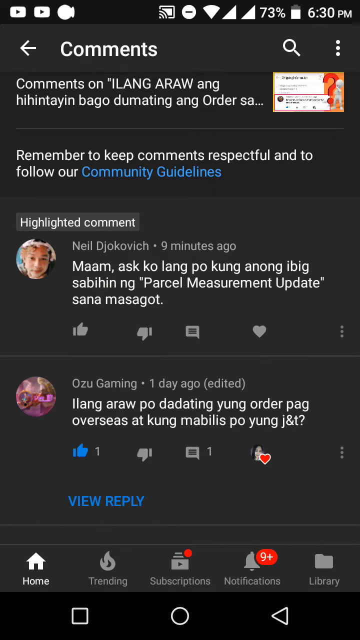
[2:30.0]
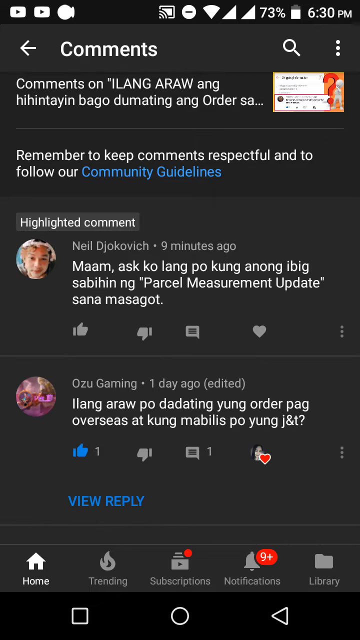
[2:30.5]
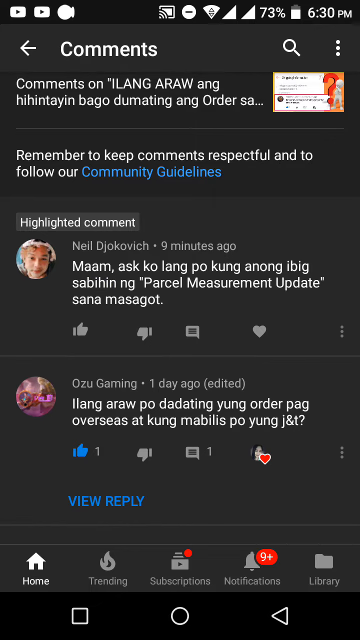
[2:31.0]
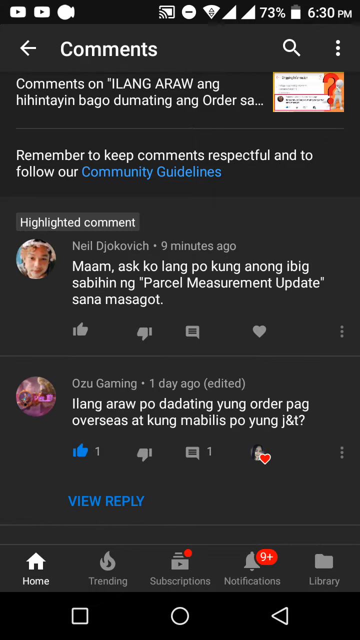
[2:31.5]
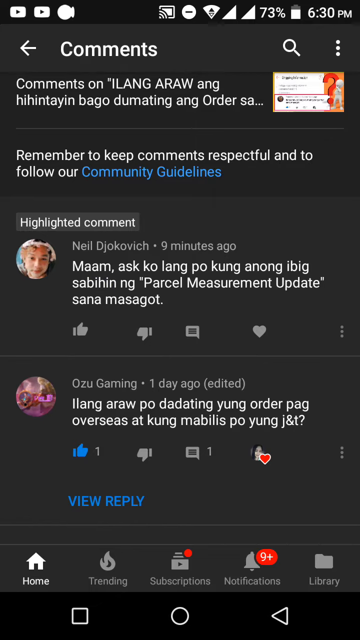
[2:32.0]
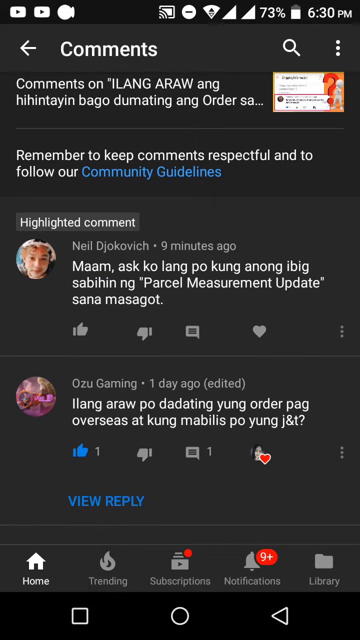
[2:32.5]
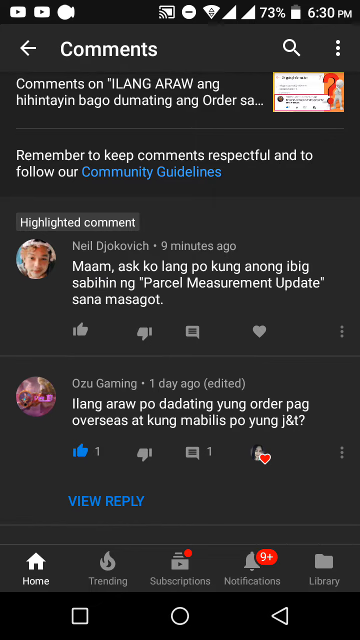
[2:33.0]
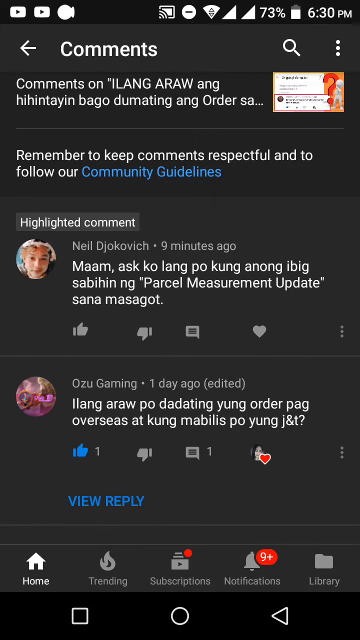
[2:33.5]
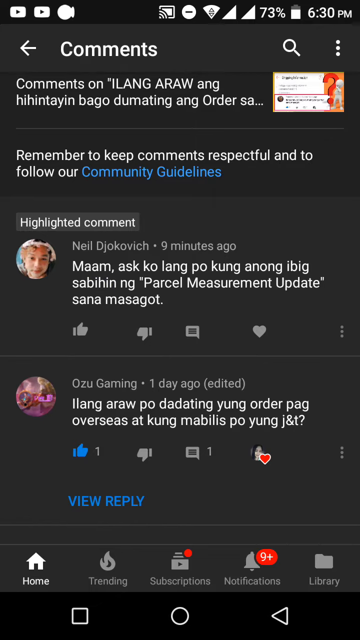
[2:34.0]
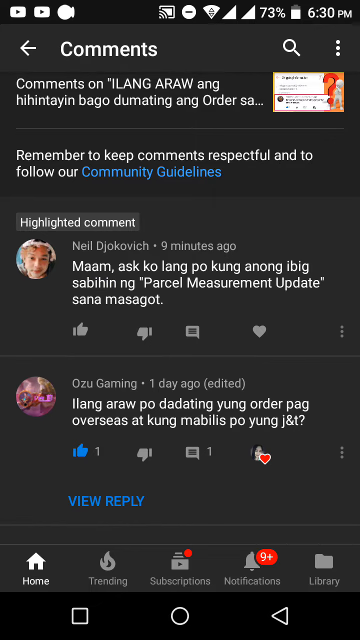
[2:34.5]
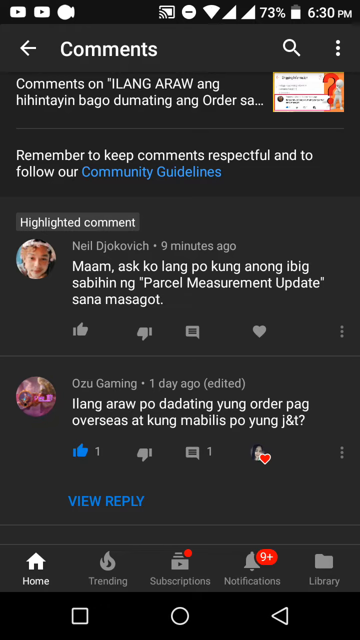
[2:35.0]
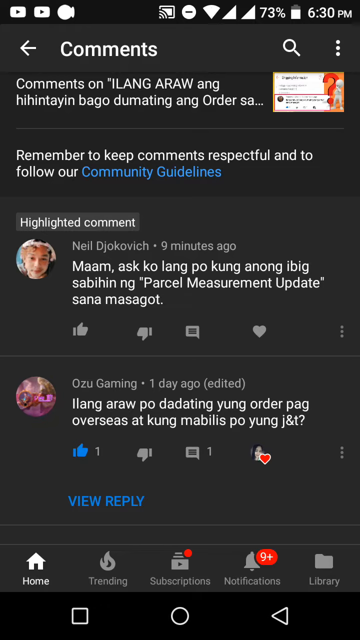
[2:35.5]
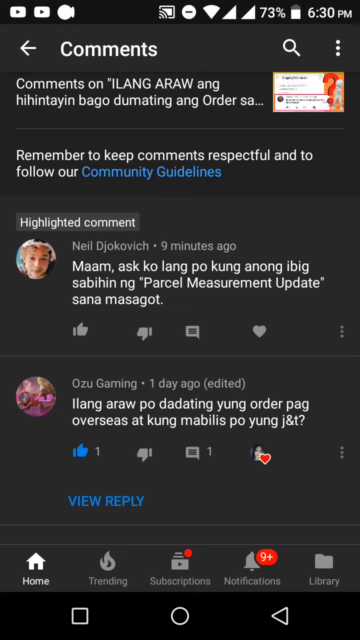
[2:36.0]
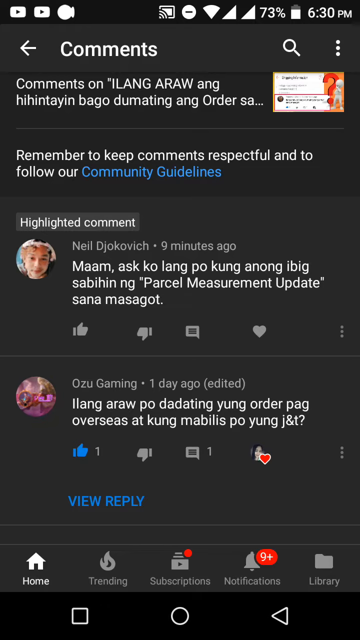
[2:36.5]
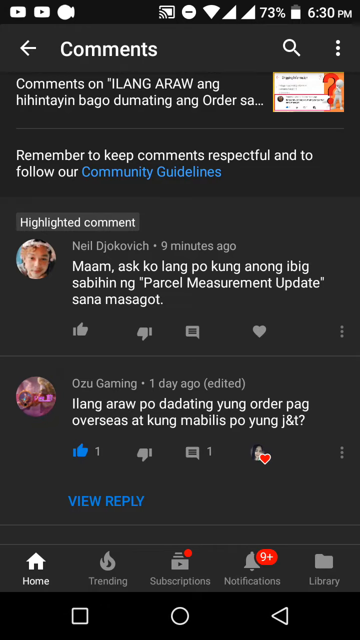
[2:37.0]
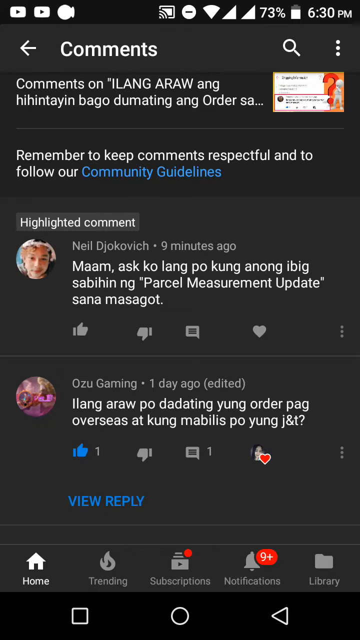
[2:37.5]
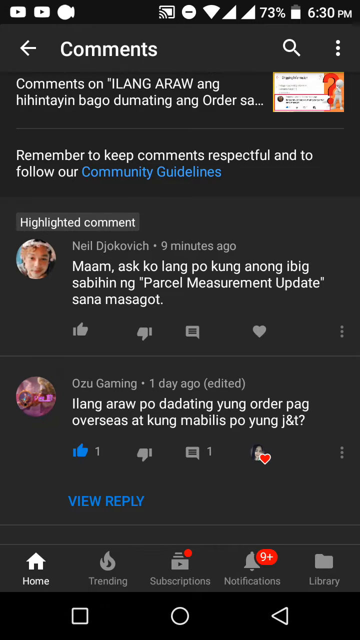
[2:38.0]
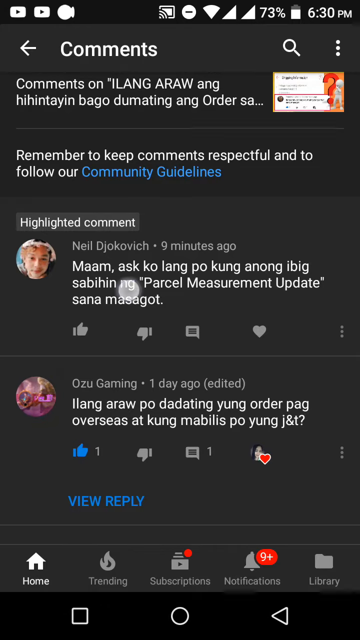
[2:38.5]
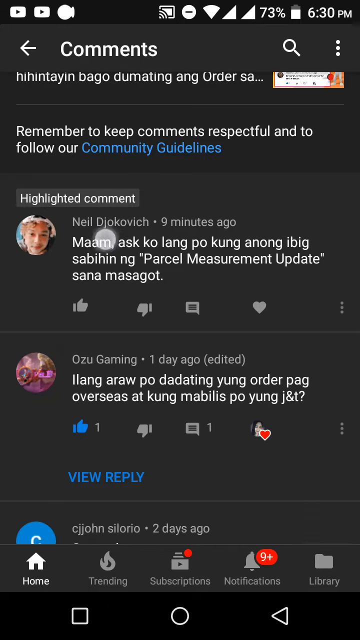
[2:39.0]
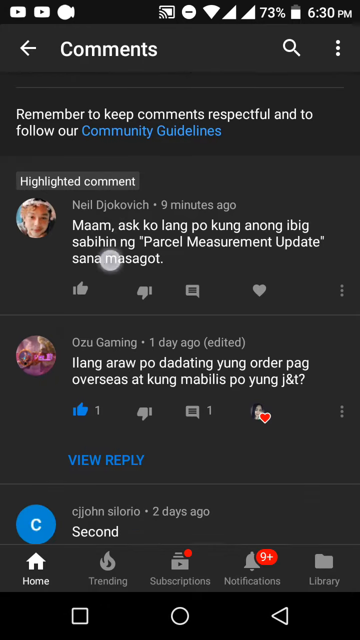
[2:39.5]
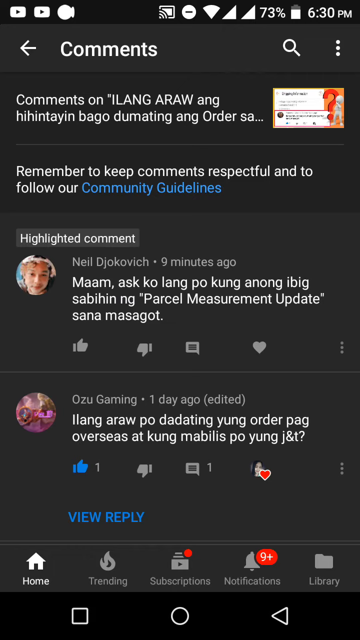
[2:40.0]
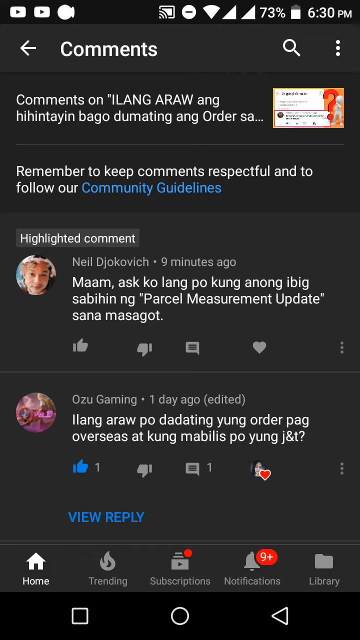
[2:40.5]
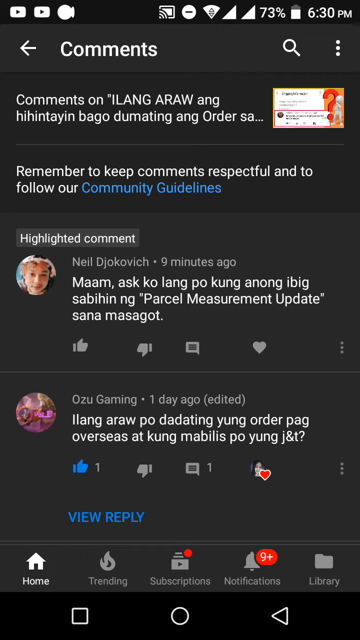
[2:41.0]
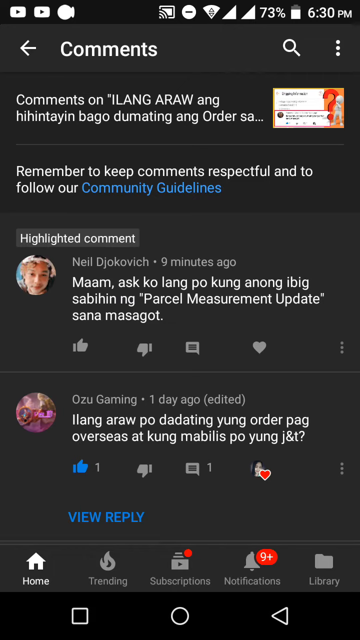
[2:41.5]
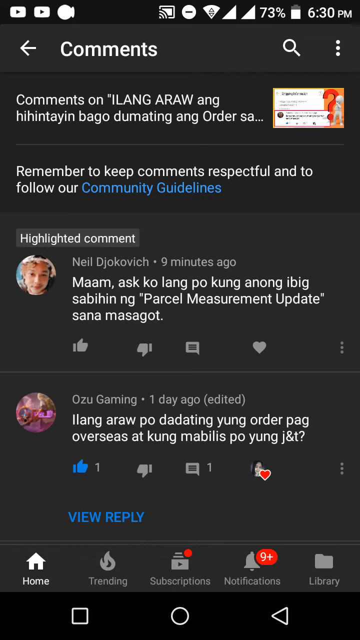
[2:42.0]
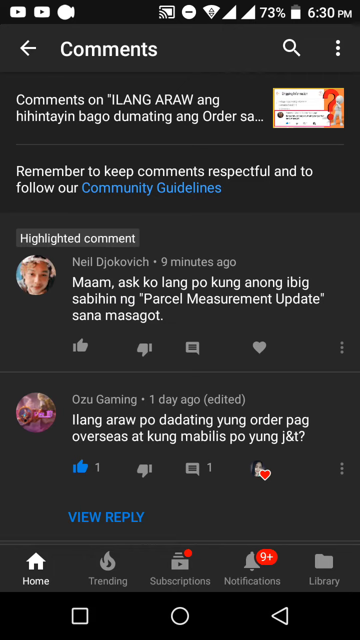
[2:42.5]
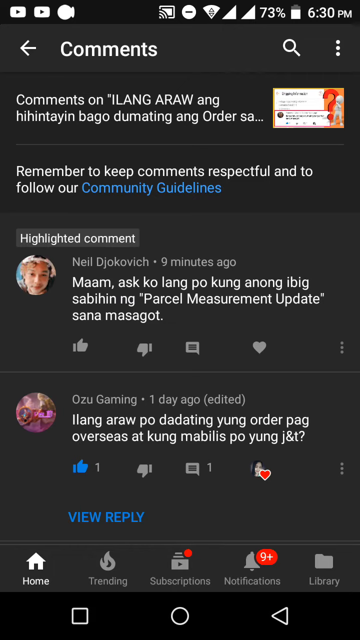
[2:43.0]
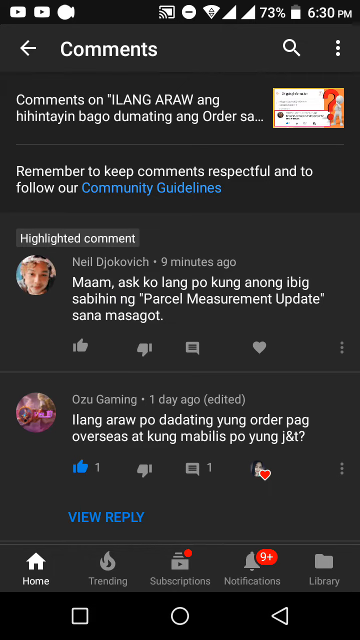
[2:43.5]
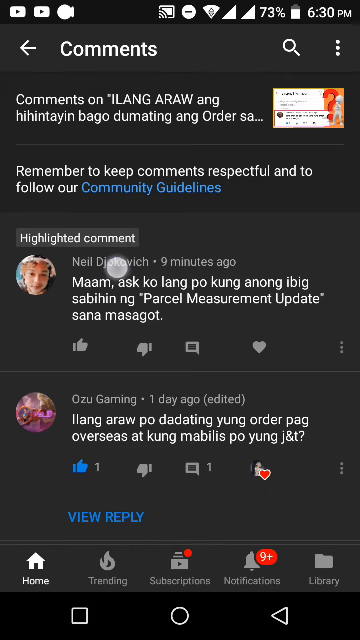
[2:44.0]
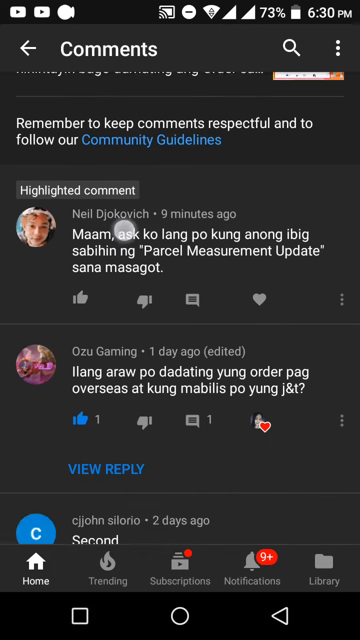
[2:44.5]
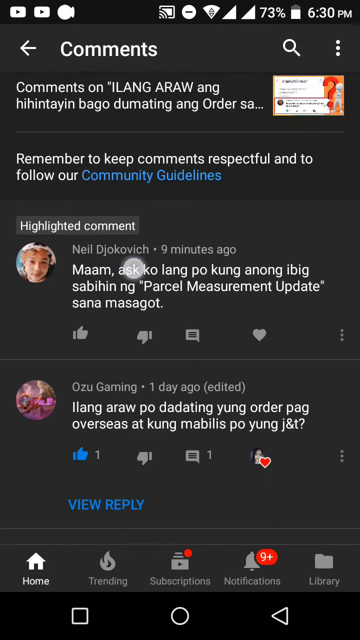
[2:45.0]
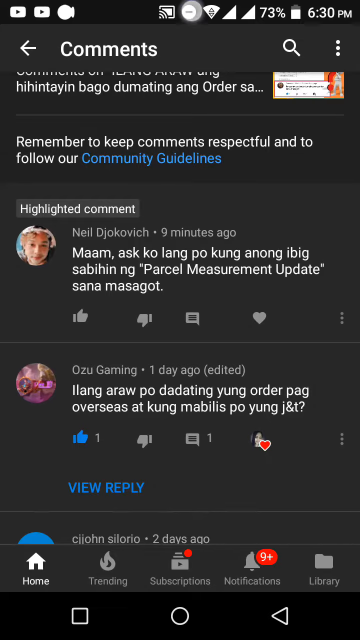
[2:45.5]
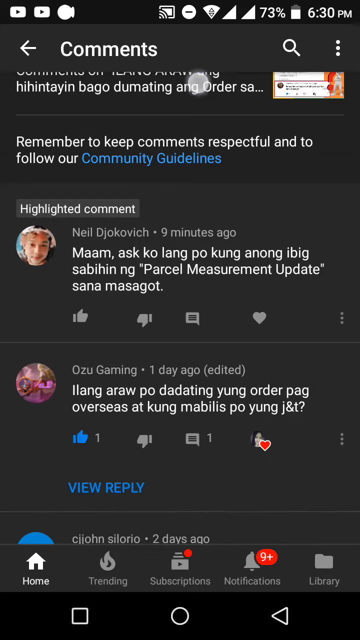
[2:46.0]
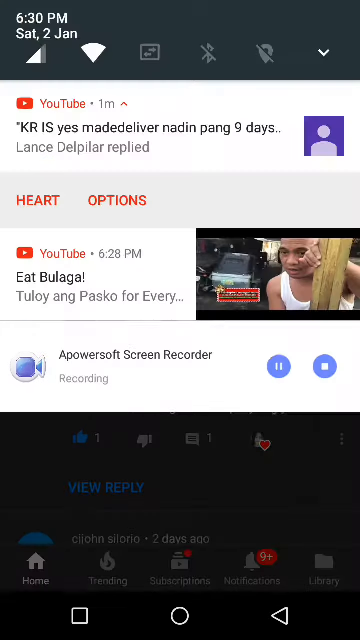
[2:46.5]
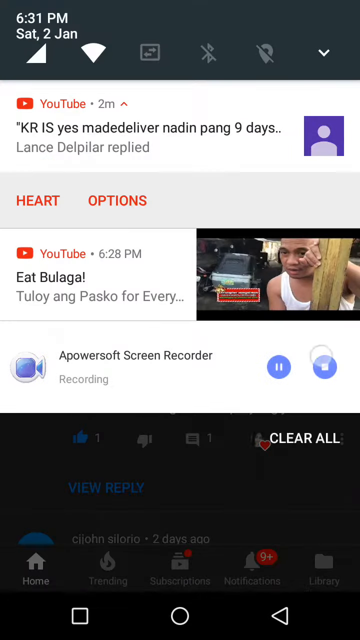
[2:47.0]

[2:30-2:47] The screen of a mobile device has a dark gray background, and the text is white except for about four words. From top to bottom, the word "comments" appears with an arrow pointing to the left on its left side. Below it, the rest of the text is in a foreign language, except for a sentence above the highlighted comment that says "remember to keep comments respectful and to follow our community guidelines," with the words "community guidelines" in blue text. Below that is the highlighted comment by Neil Djokovic from nine minutes ago, and below it another comment by Ozu Gaming from one day ago, edited. After a few seconds, a round white mouse tracker appears on the first comment and scrolls slightly up and down, repeating this action about twice.